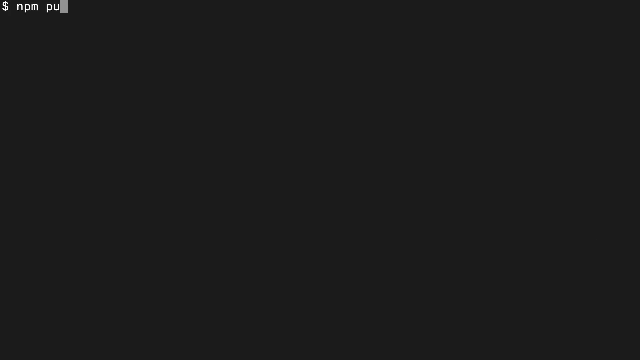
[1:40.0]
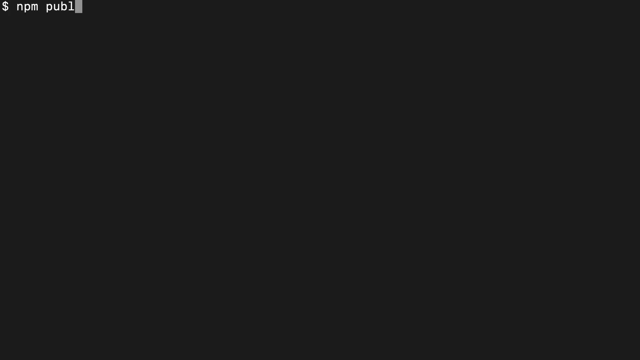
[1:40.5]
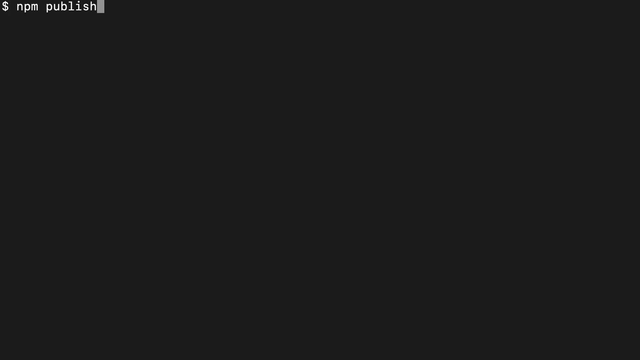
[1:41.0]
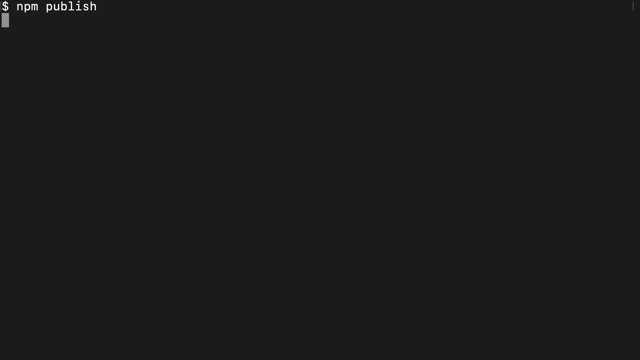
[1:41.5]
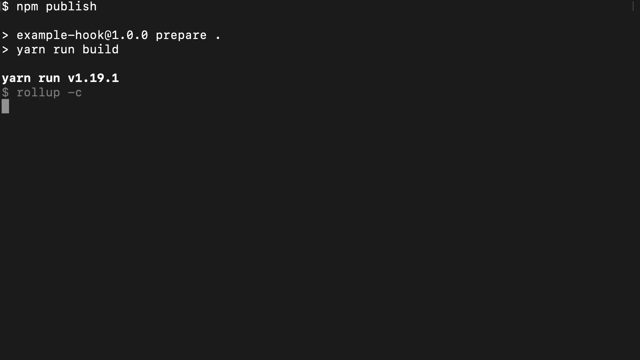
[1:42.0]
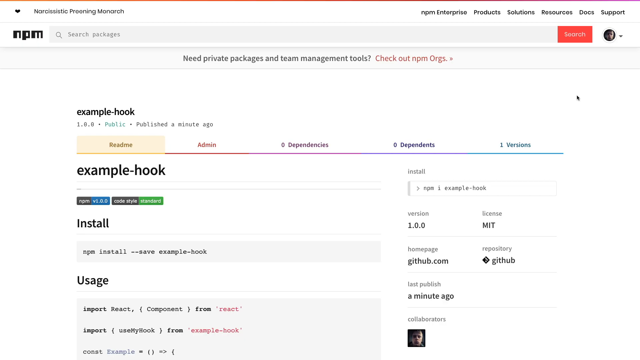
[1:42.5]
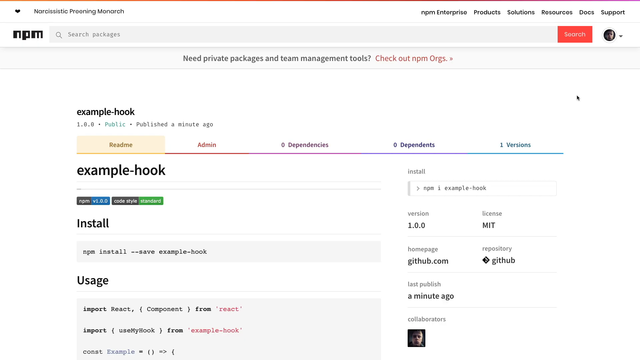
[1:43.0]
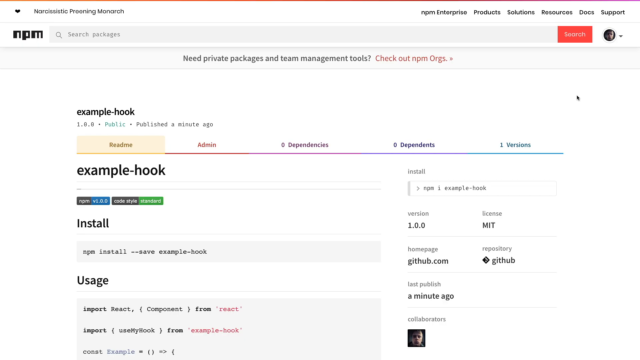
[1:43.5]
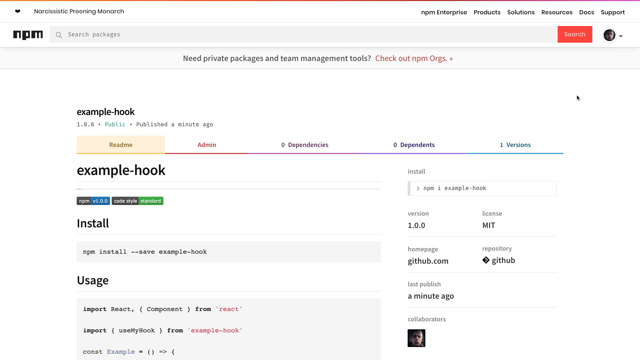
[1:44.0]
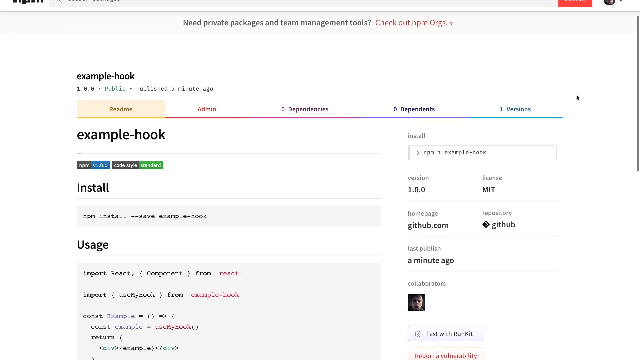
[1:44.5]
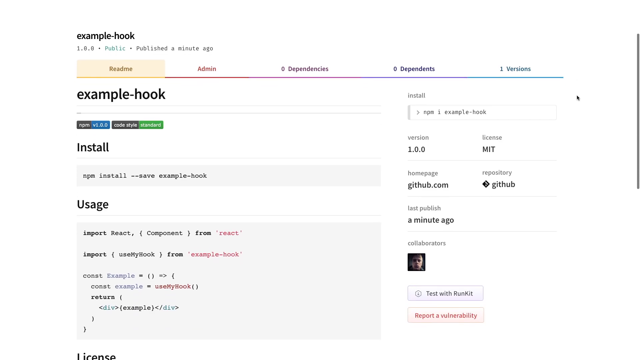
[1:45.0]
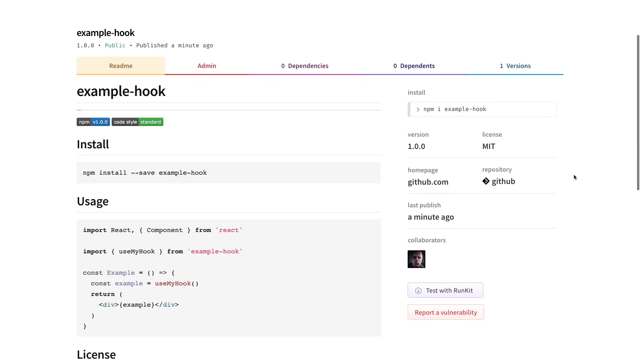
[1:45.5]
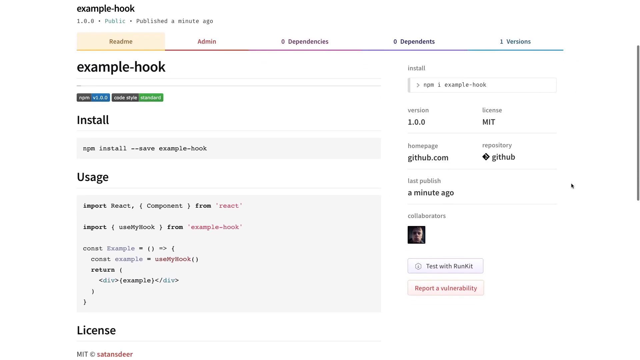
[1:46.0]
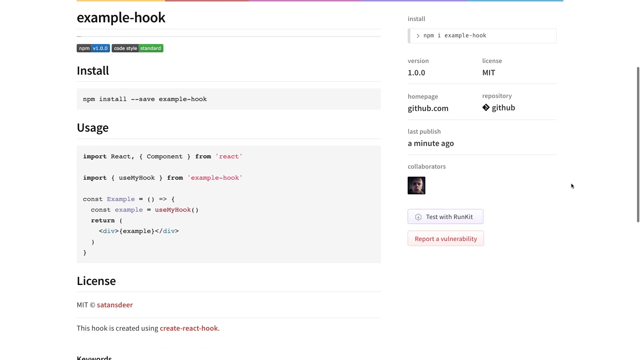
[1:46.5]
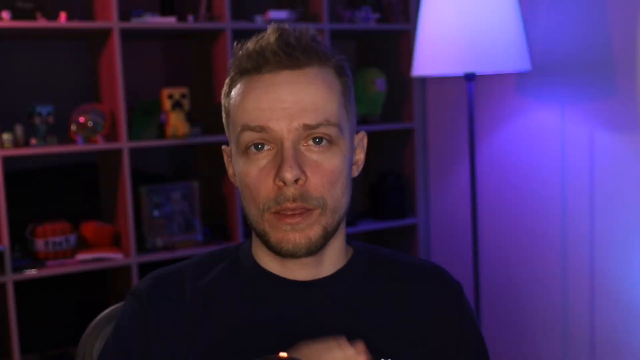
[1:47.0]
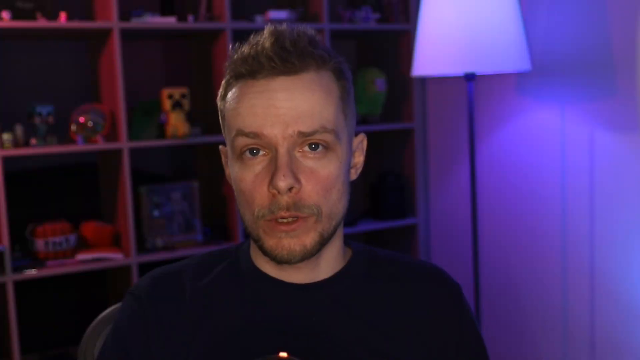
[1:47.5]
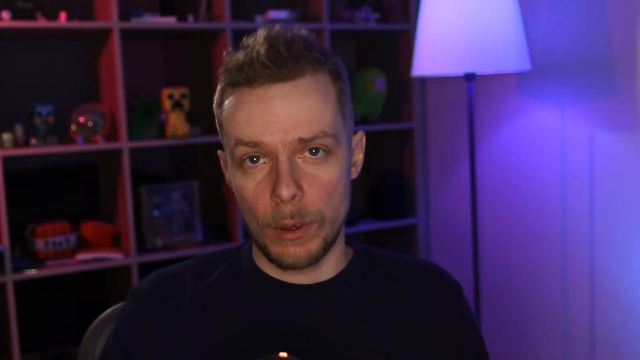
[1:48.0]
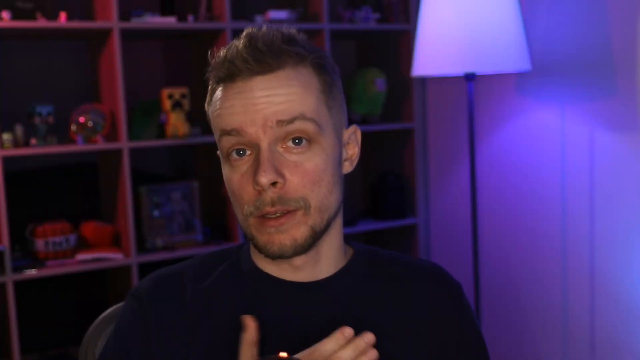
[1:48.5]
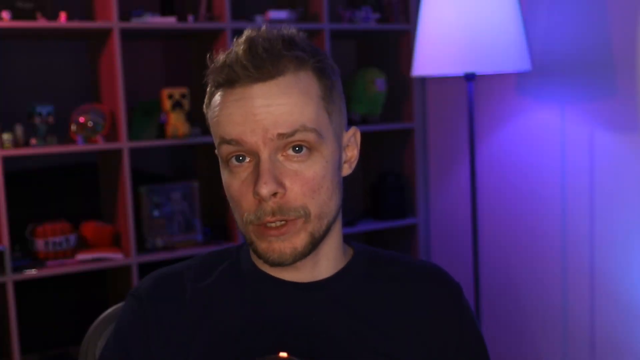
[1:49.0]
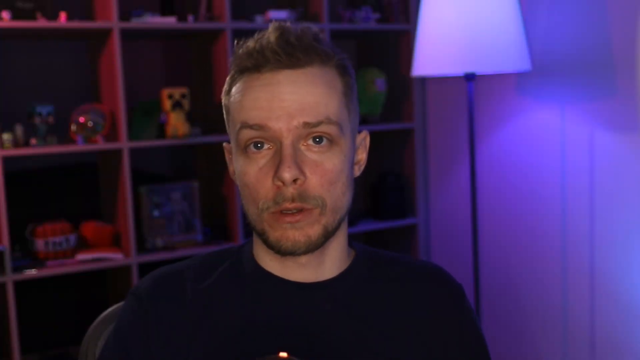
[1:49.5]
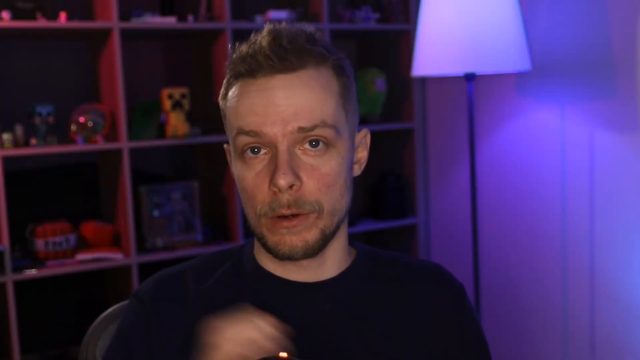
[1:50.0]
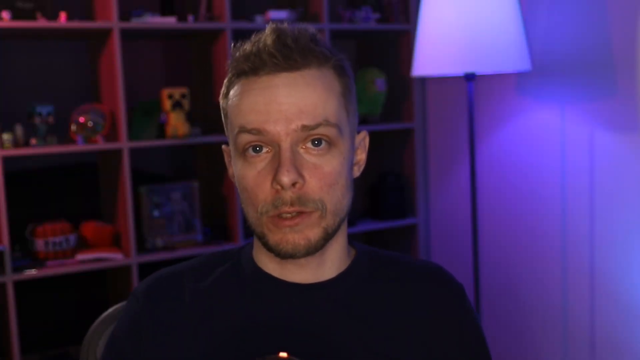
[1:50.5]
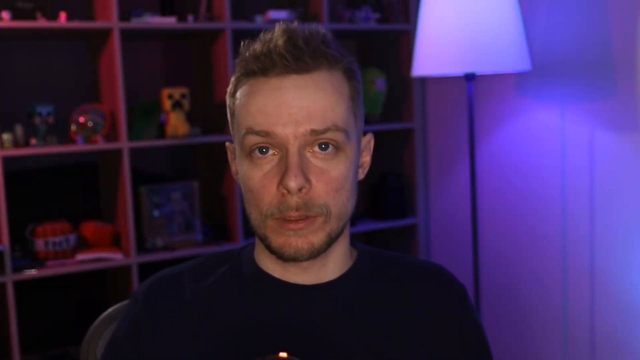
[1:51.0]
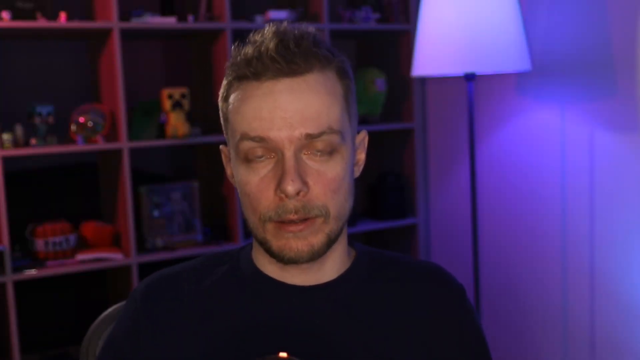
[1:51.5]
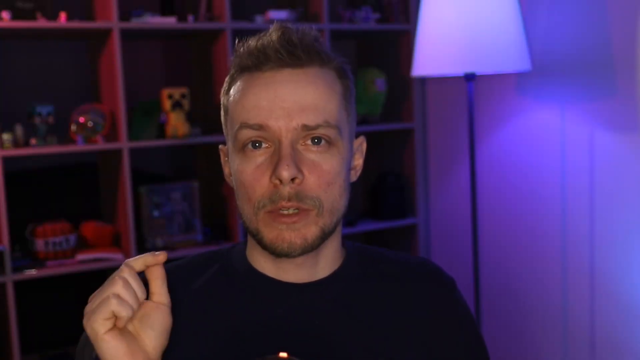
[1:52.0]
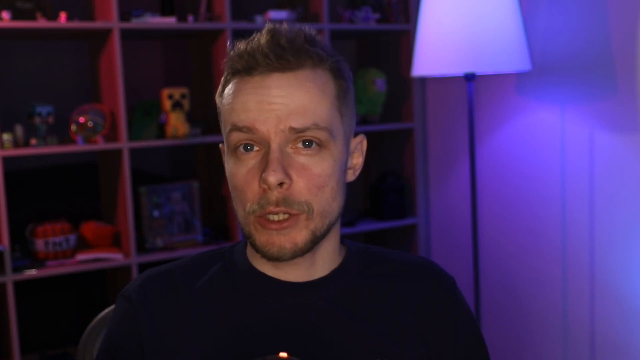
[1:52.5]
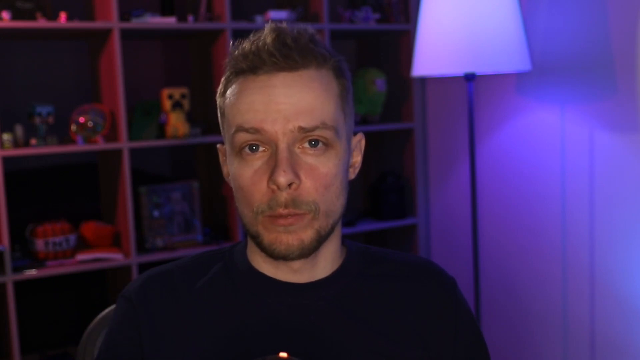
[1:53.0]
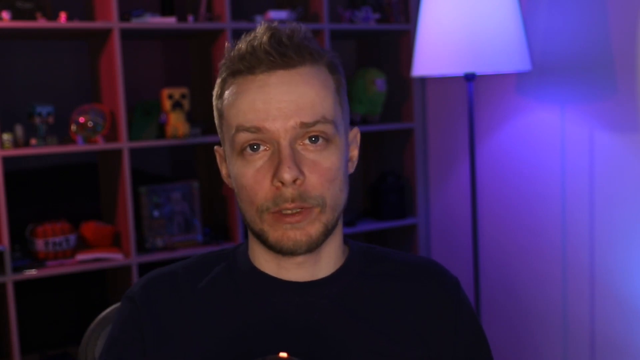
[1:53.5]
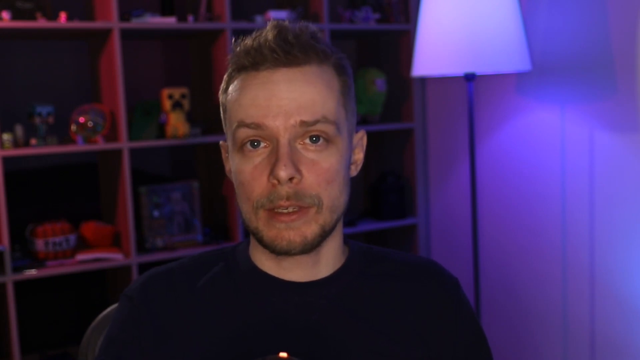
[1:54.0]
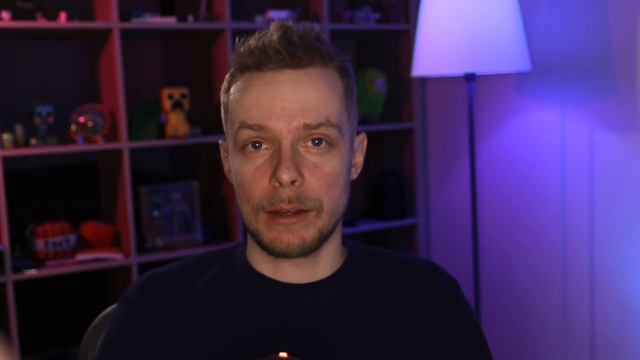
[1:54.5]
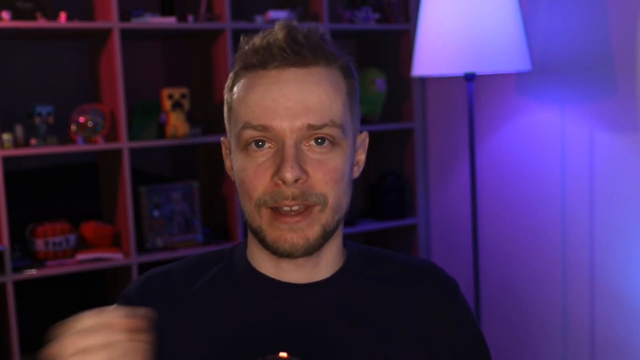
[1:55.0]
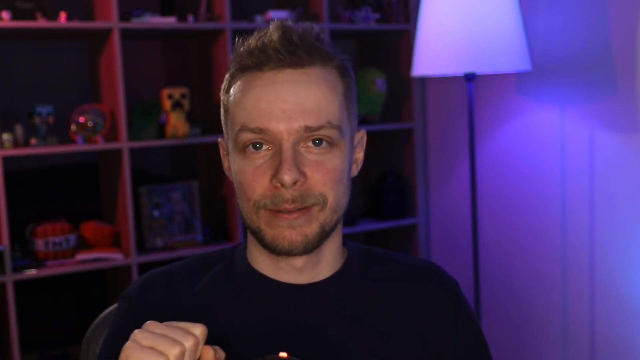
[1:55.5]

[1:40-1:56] On a completely black screen, the user types white text in the top left corner: "$ npm publish" on the first line, then two lines below "> example hook at 1.0.0 prepare", and on the next line "> yarn run build". Two lines below that comes "yarn run v1.19.1", with "$ roll up -c" underneath in faded gray text, and two lines further down, in blue text, "src/index.js → this/index.js, this/index.es.js...". The video then cuts to a completely white website with "npm" in the top corner, a download page for example hook. Under "example hook" are install and usage sections, version details on the right side, and other items in the top right corner such as product, solution, resources, docs and support. The user scrolls down a couple of times. The video then returns to the man in the navy t-shirt, with the shelves and the lamp behind him, talking to the camera; his right hand pops up and moves right, left, and up and down as he talks.